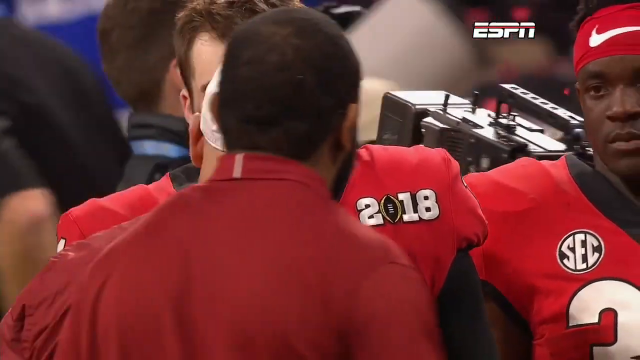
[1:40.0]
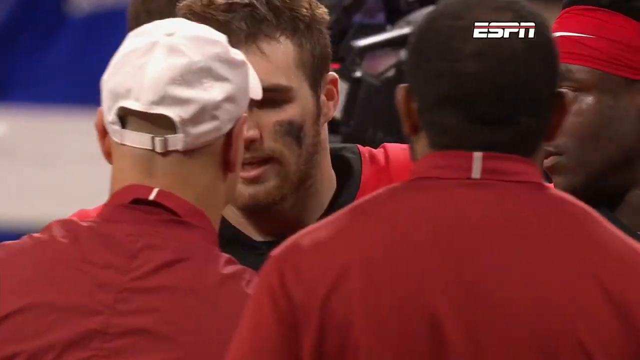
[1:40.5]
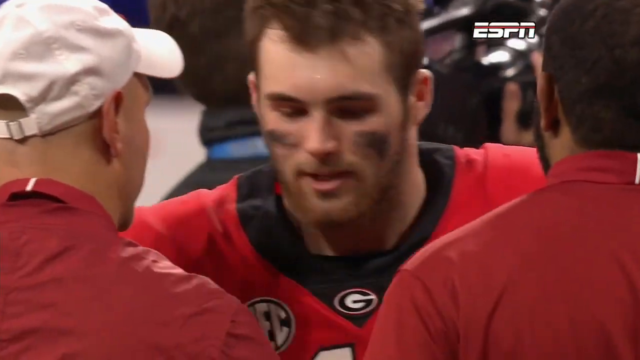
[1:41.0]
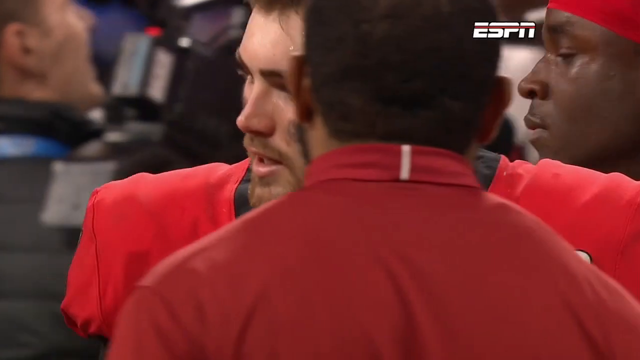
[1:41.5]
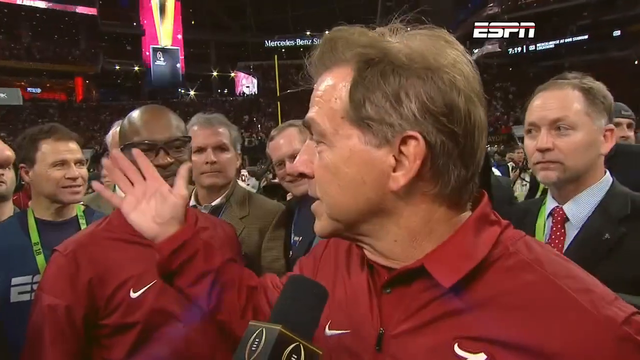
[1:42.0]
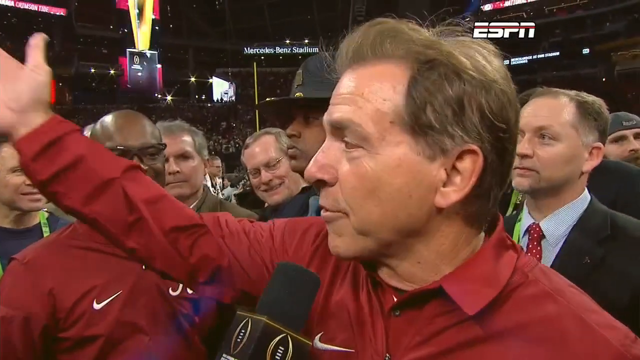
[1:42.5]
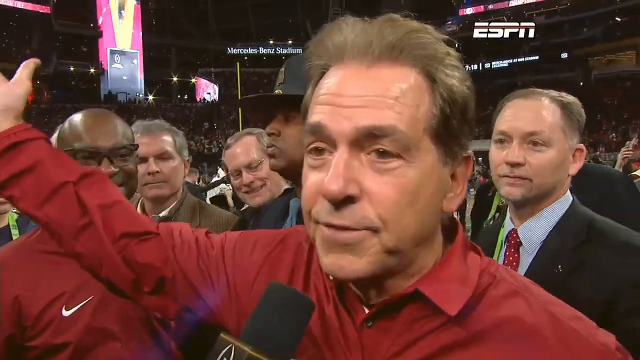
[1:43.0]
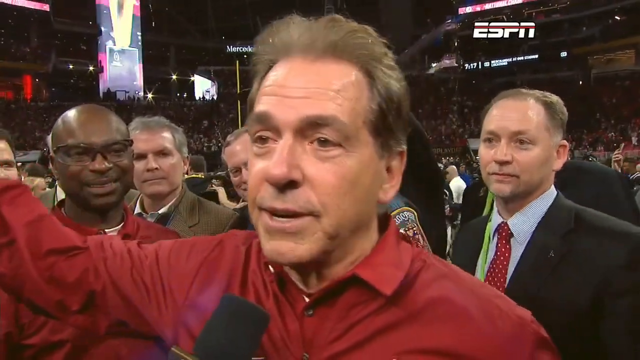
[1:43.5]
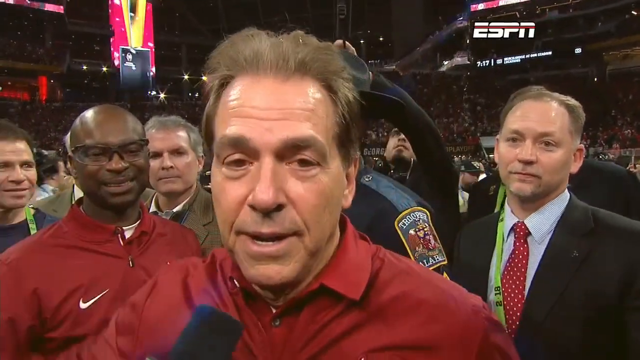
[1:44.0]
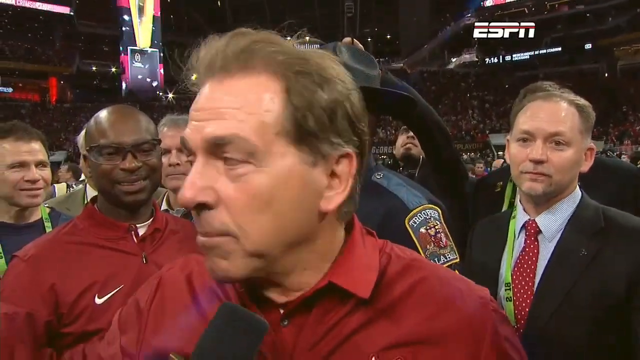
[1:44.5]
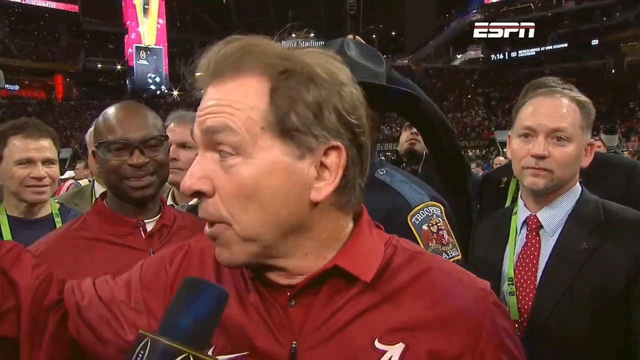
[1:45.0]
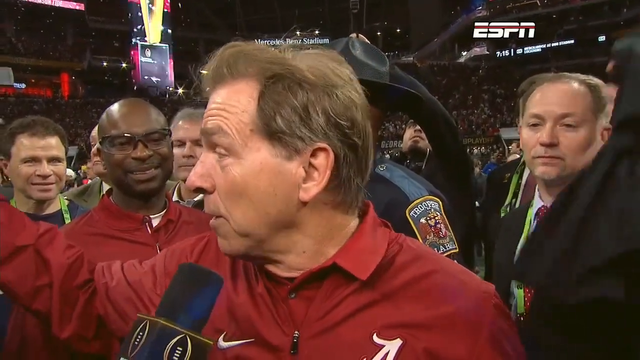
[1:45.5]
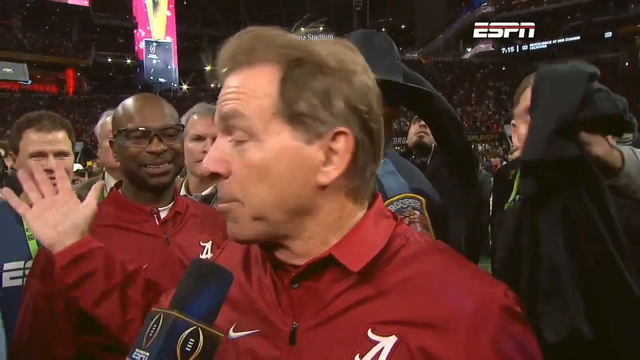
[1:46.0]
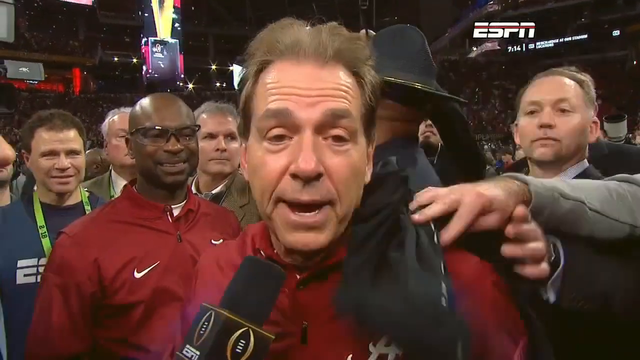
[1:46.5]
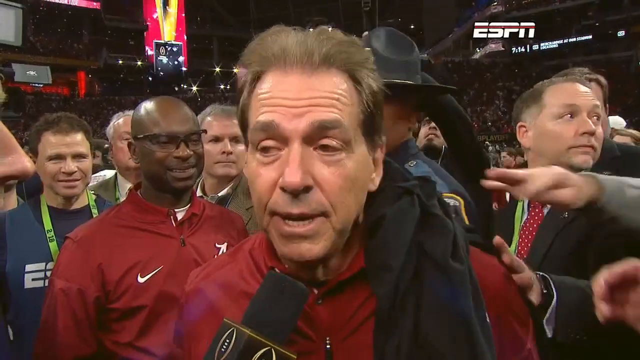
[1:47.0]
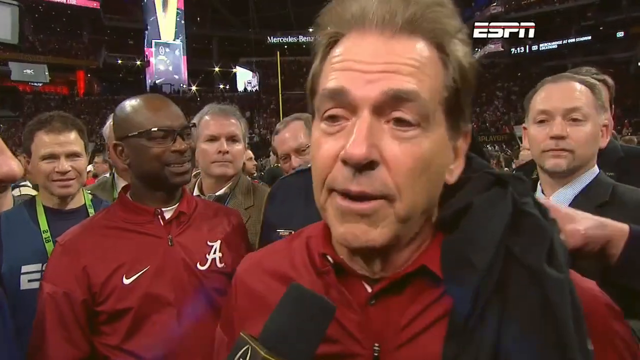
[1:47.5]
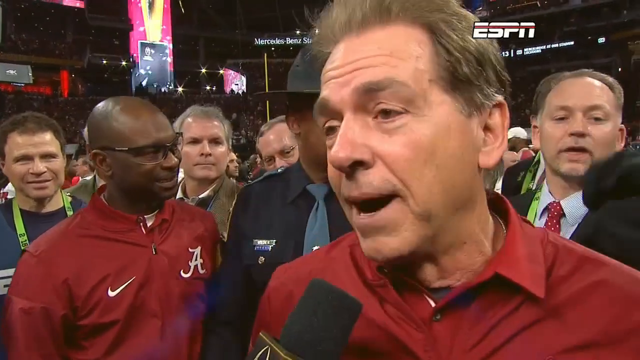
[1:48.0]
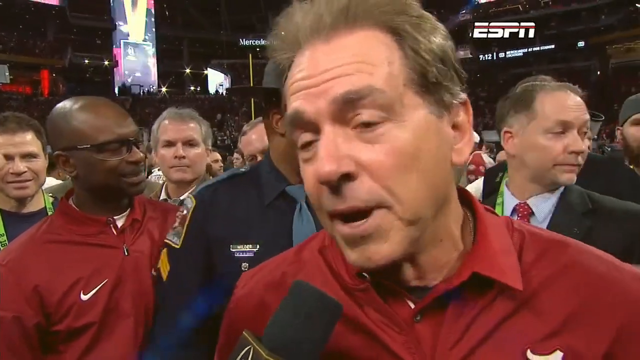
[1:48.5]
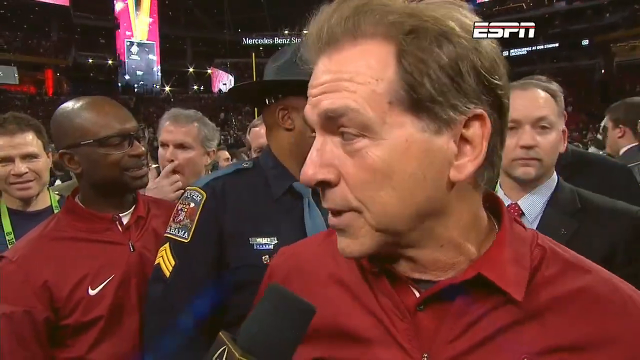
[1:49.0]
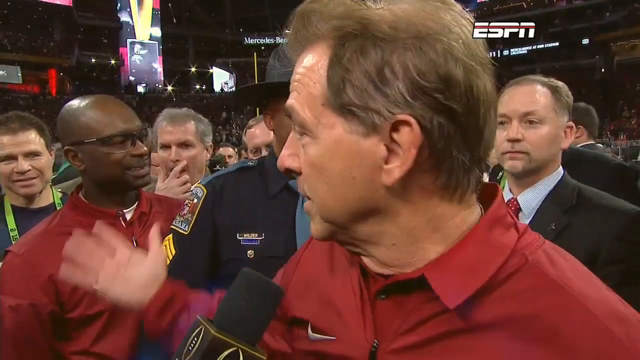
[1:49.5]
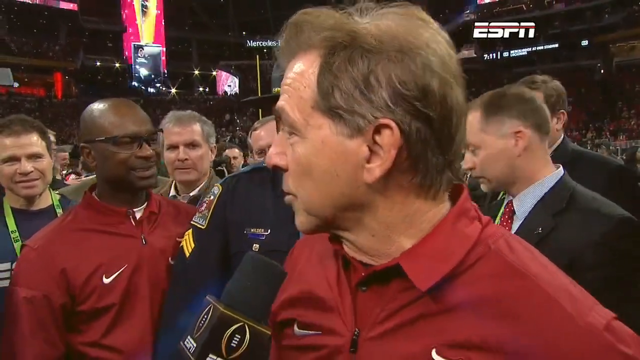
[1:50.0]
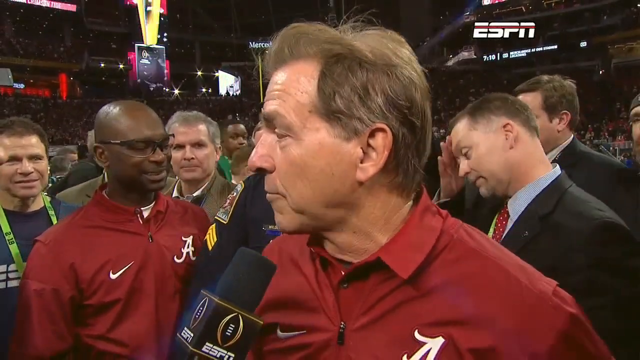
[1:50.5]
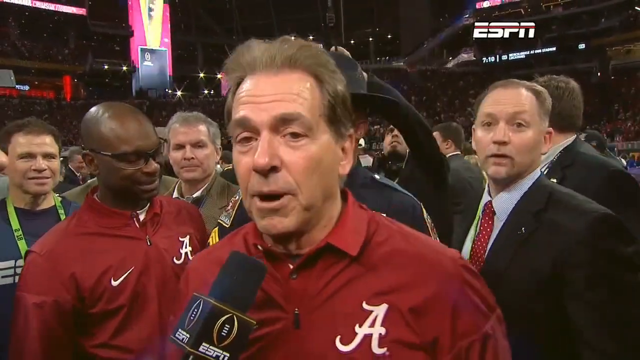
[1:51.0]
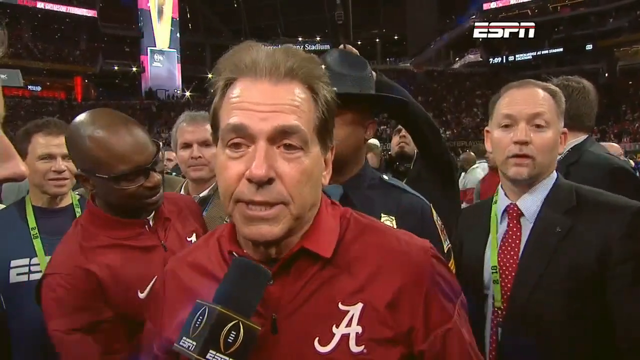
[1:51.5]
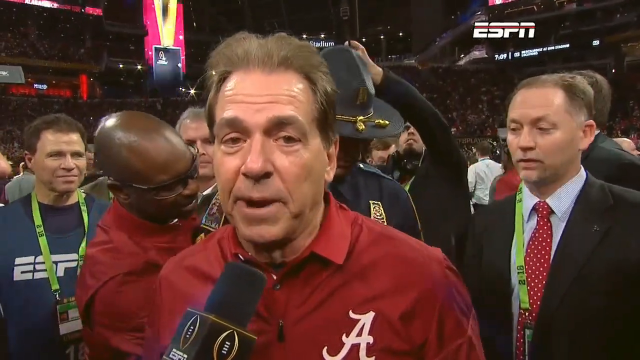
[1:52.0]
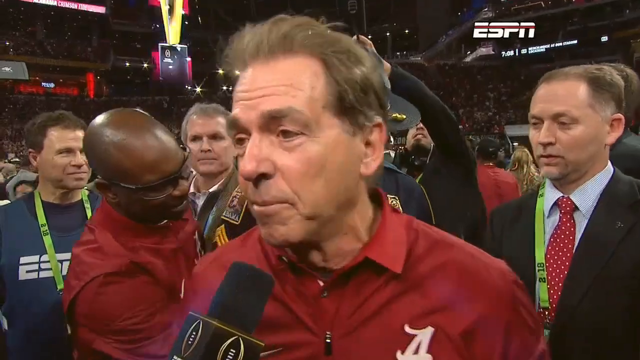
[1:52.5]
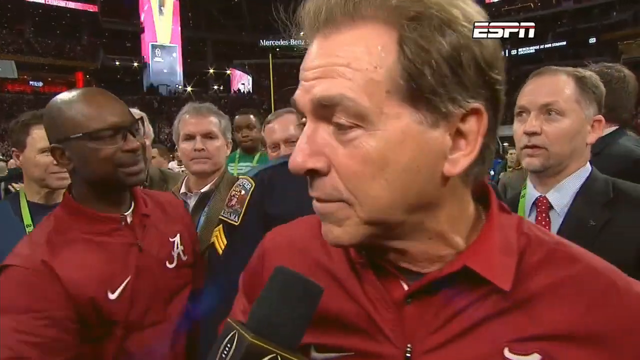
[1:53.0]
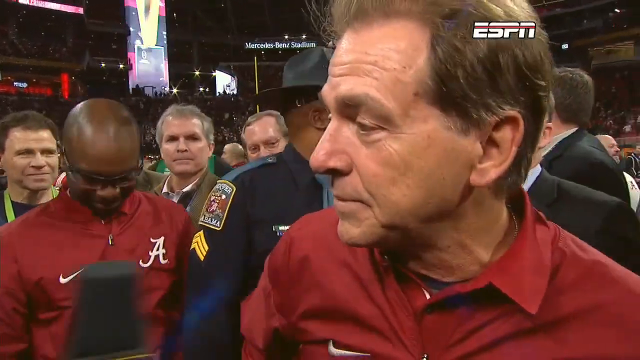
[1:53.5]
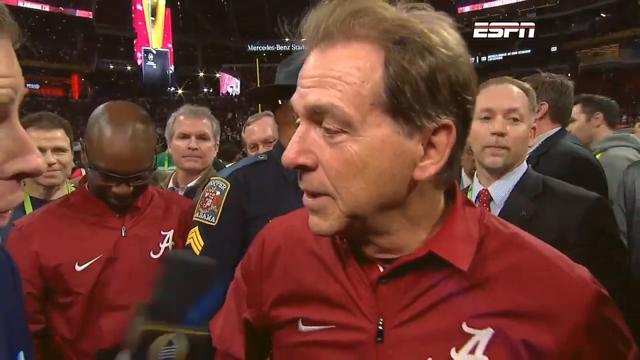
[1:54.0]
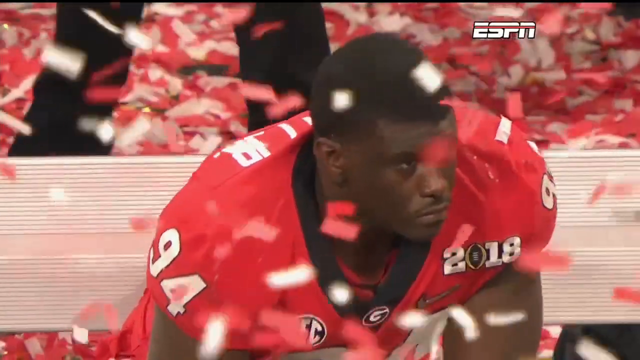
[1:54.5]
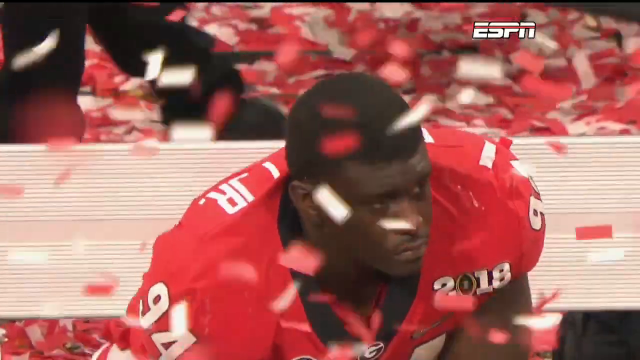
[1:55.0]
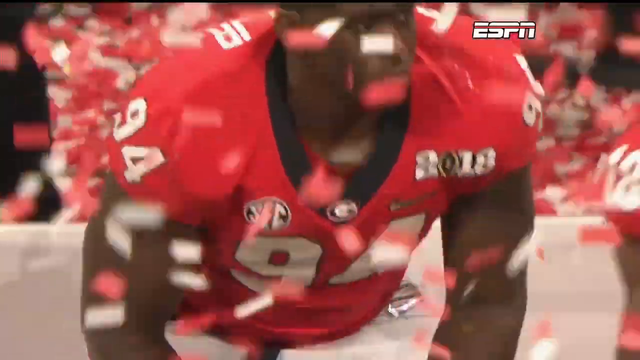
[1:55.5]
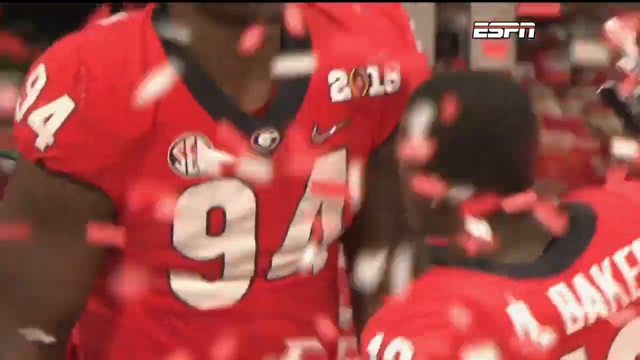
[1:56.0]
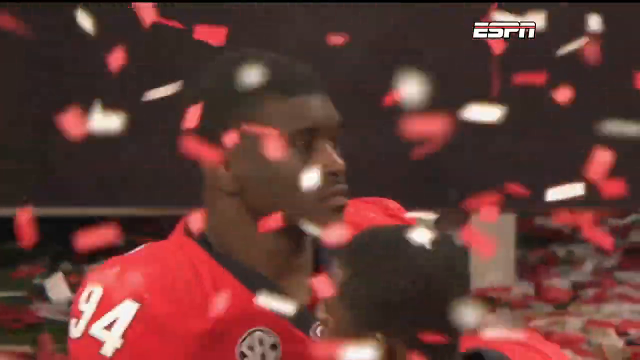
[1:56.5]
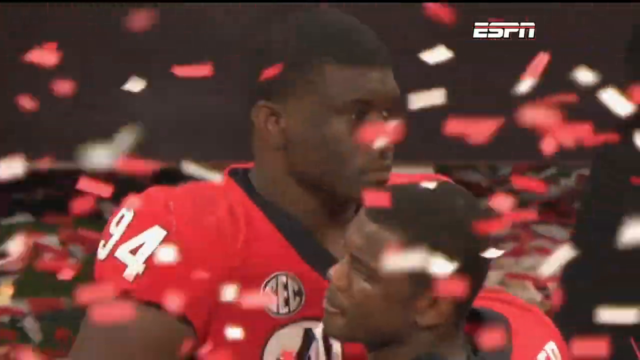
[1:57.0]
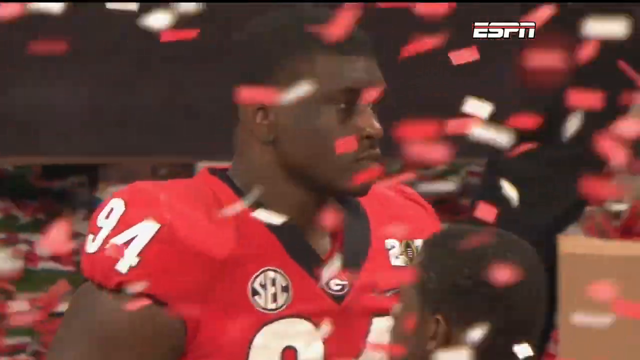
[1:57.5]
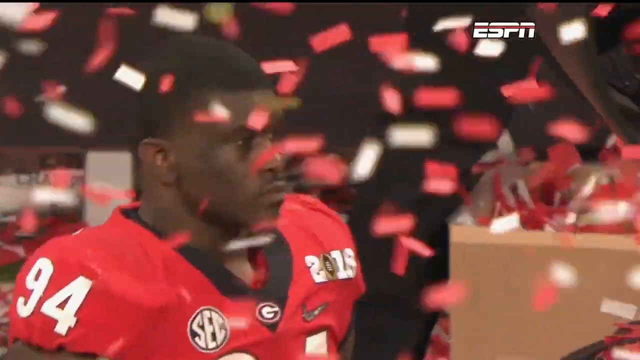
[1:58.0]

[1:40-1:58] At the end of the ESPN interview, Coach Saban gestures to the whole field. Flashes show Georgia players, who seem disappointed but are still supporting each other. Confetti is all over the place, and everyone shown seems to be full of emotion.